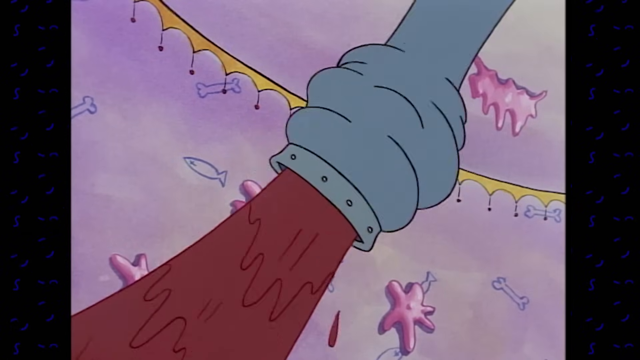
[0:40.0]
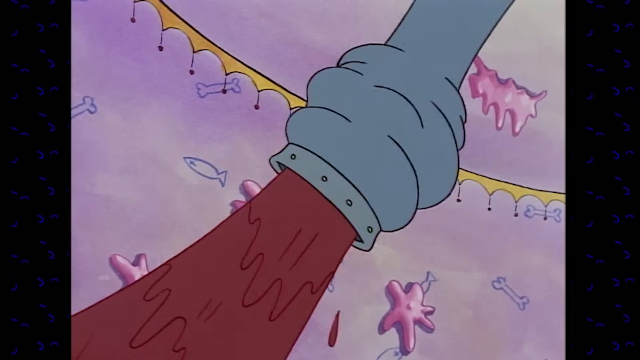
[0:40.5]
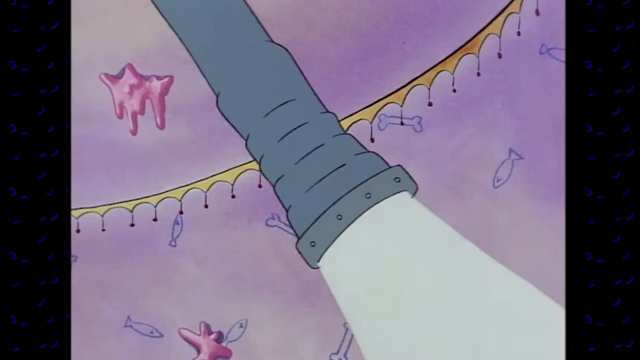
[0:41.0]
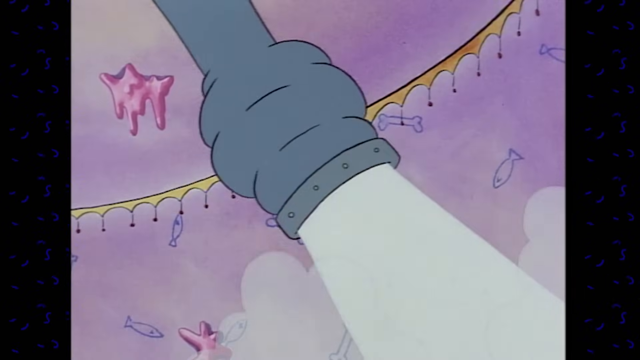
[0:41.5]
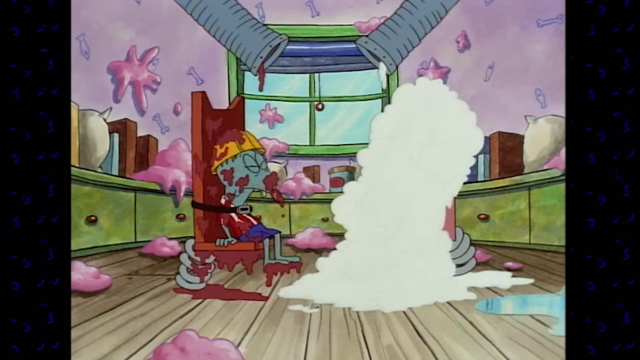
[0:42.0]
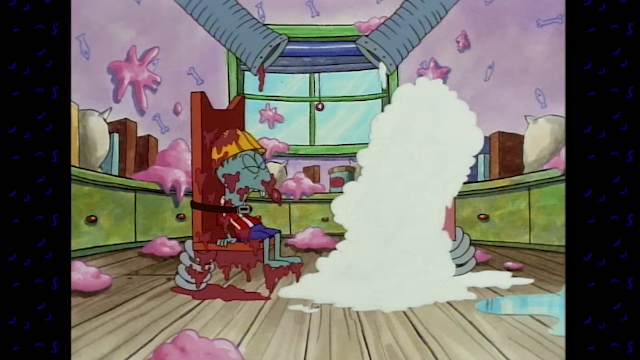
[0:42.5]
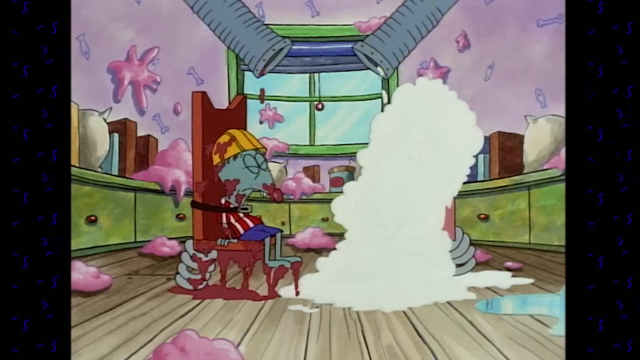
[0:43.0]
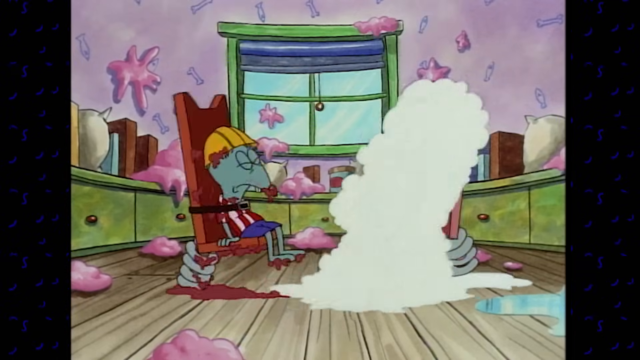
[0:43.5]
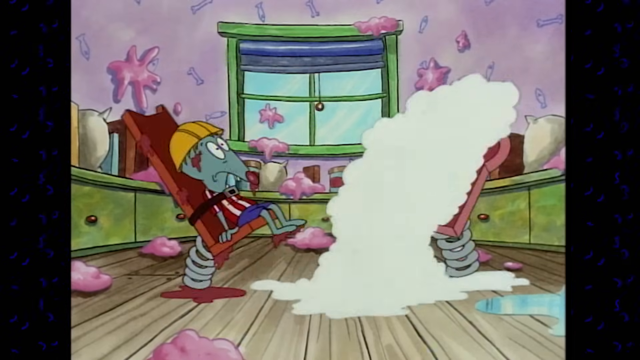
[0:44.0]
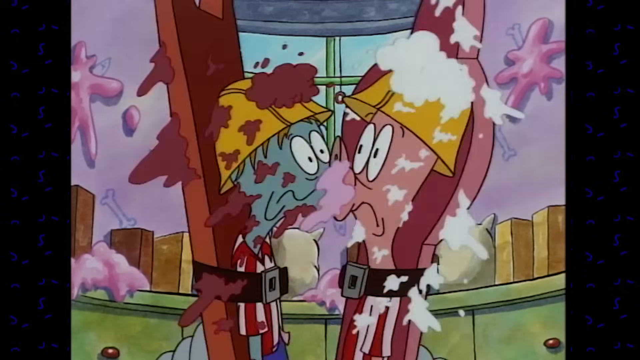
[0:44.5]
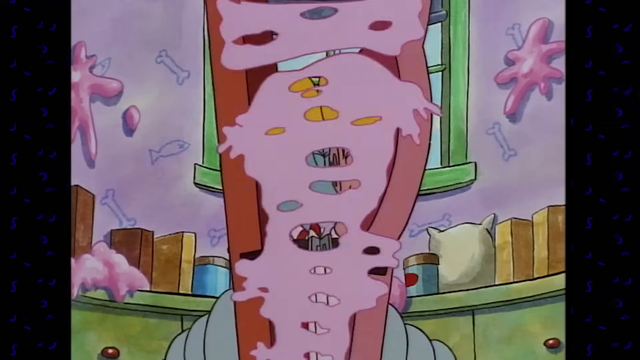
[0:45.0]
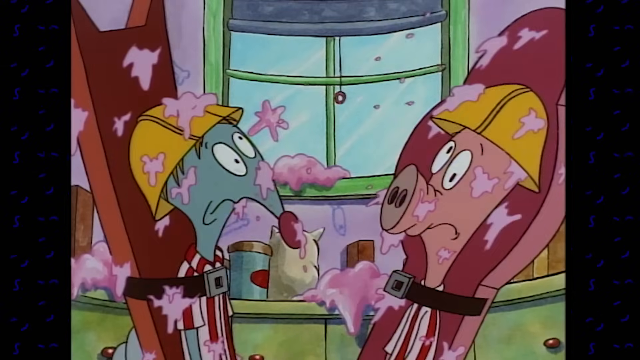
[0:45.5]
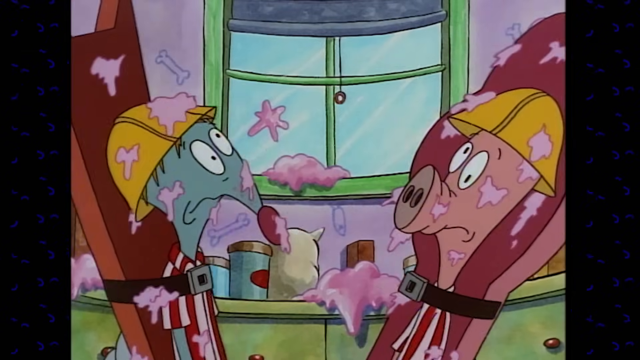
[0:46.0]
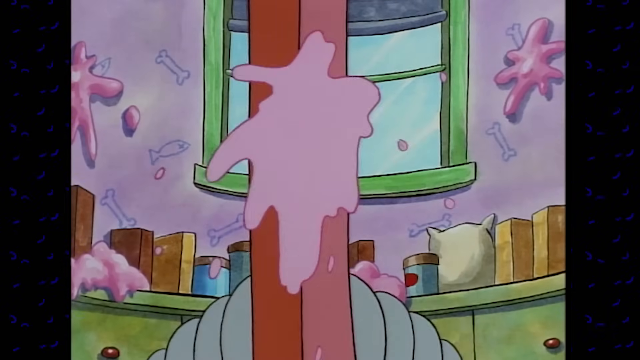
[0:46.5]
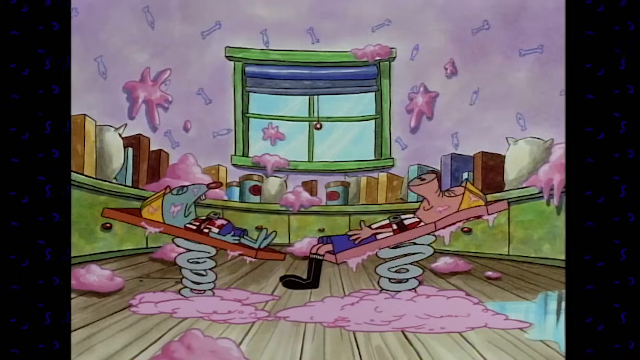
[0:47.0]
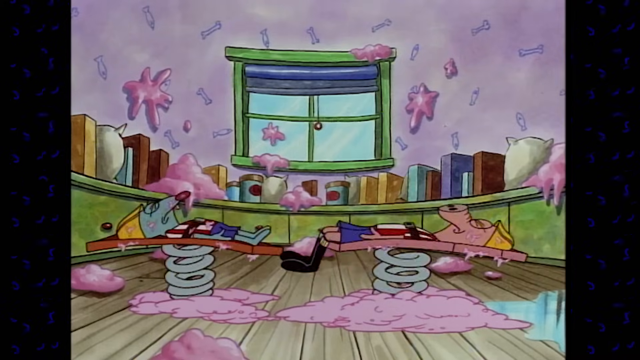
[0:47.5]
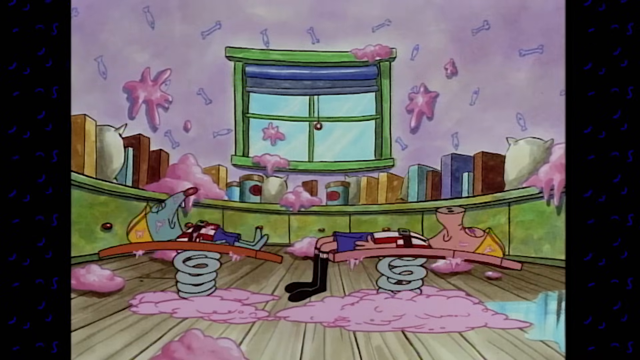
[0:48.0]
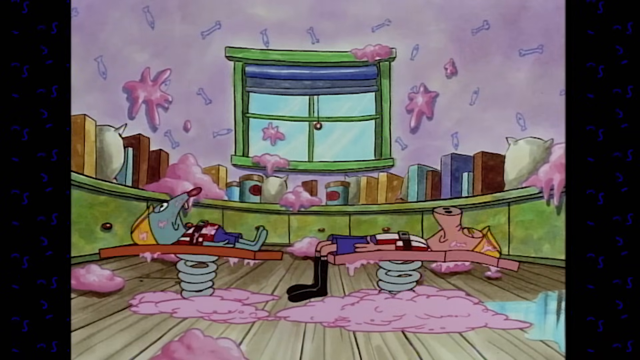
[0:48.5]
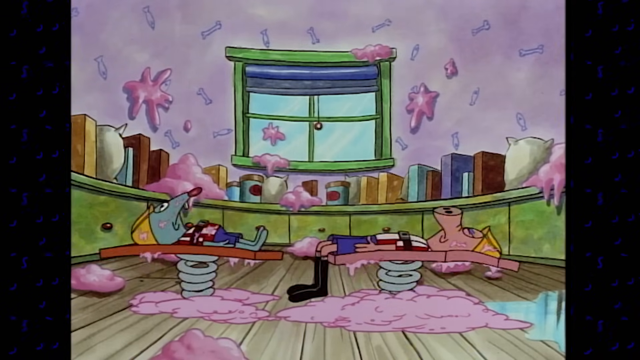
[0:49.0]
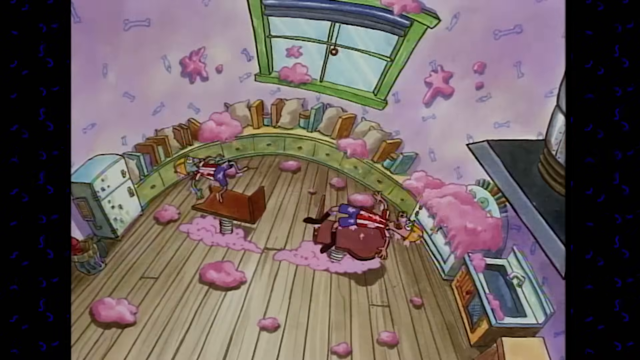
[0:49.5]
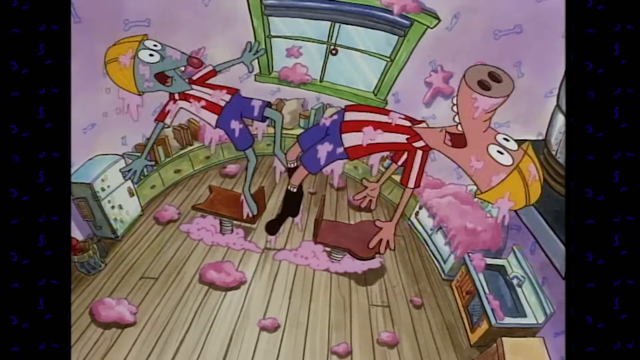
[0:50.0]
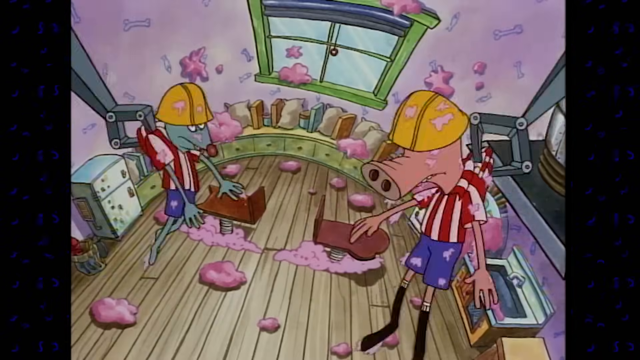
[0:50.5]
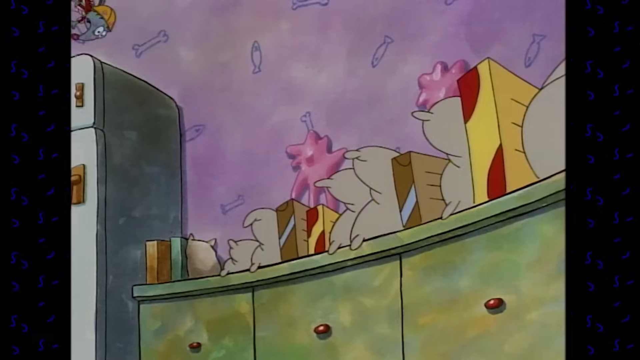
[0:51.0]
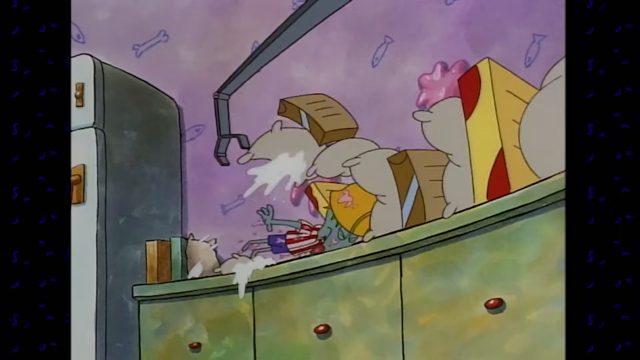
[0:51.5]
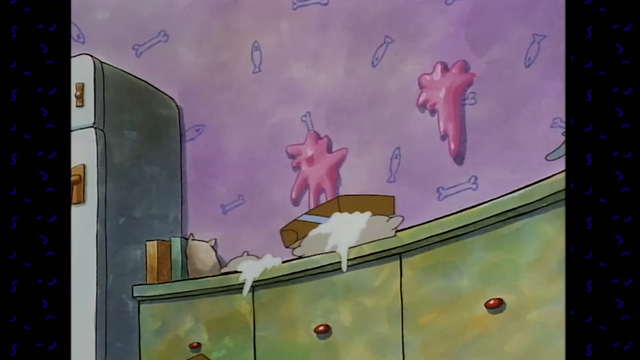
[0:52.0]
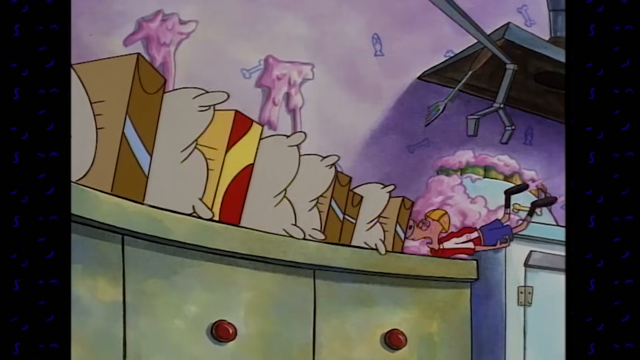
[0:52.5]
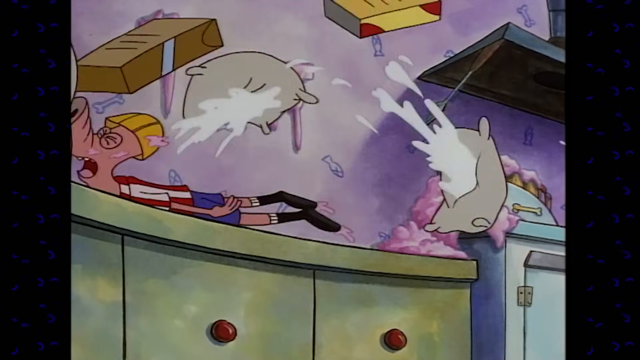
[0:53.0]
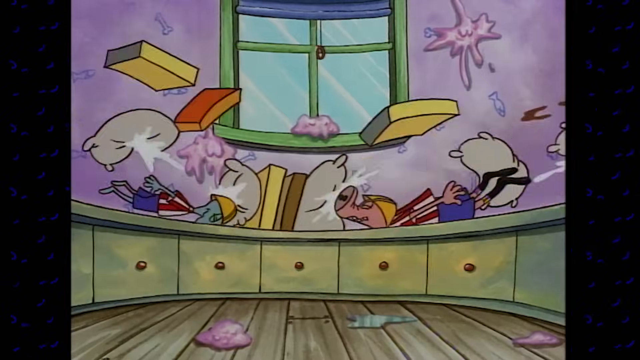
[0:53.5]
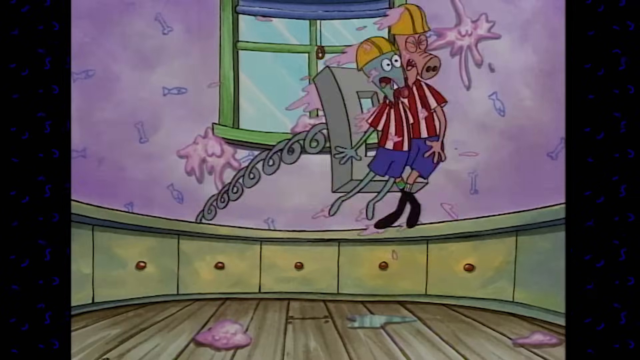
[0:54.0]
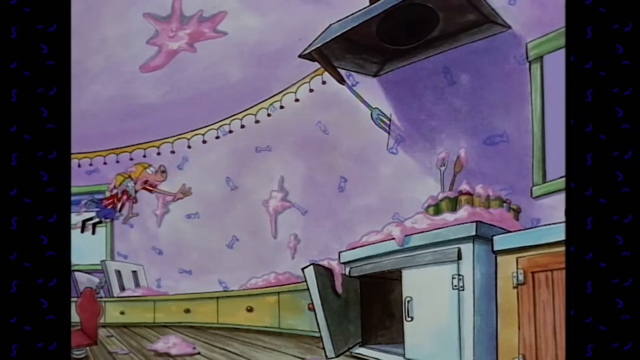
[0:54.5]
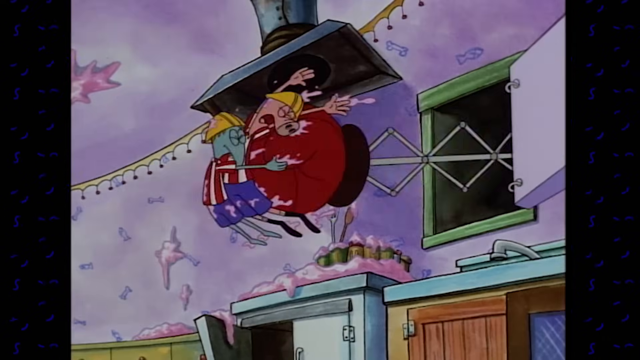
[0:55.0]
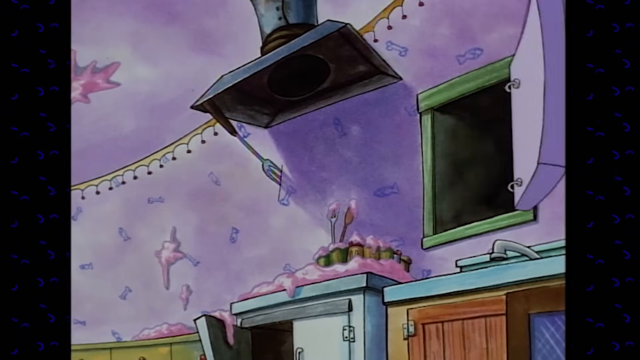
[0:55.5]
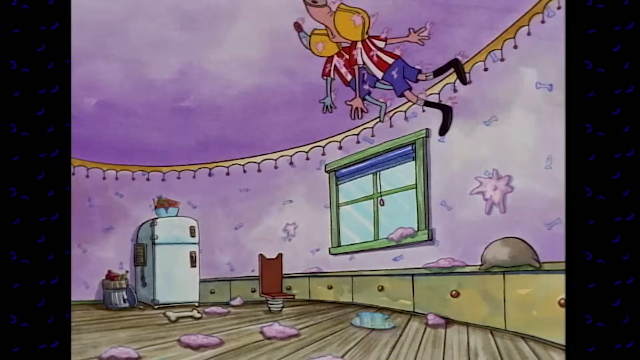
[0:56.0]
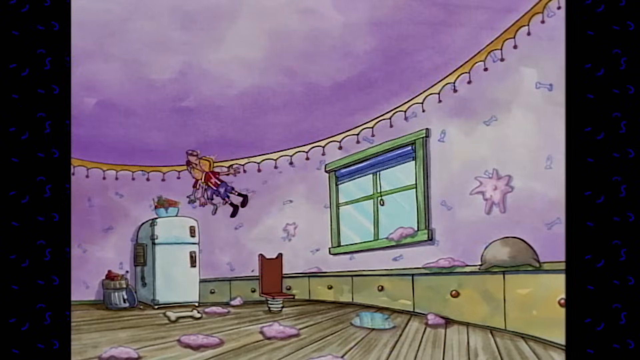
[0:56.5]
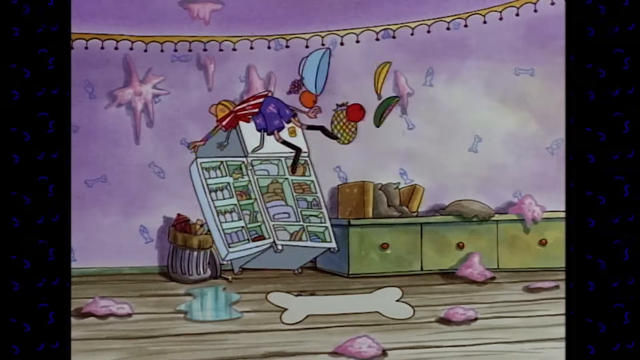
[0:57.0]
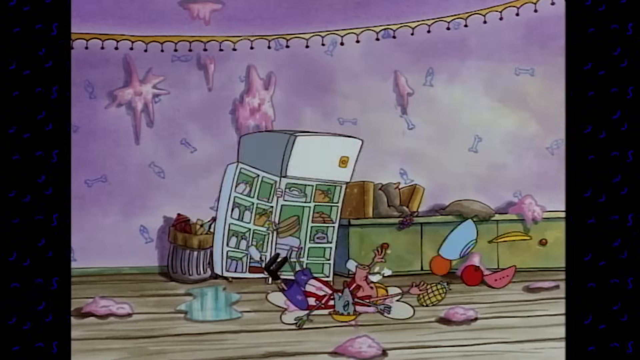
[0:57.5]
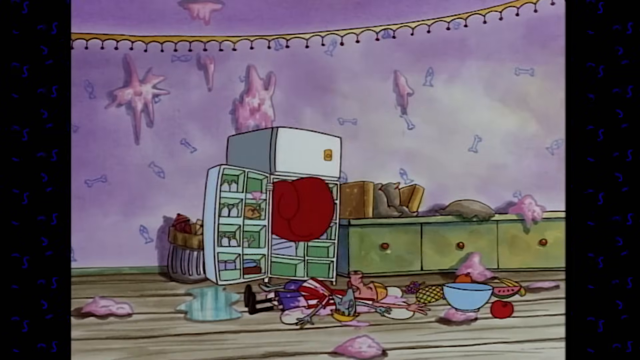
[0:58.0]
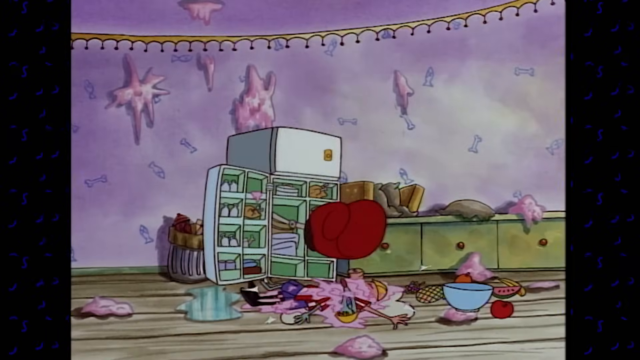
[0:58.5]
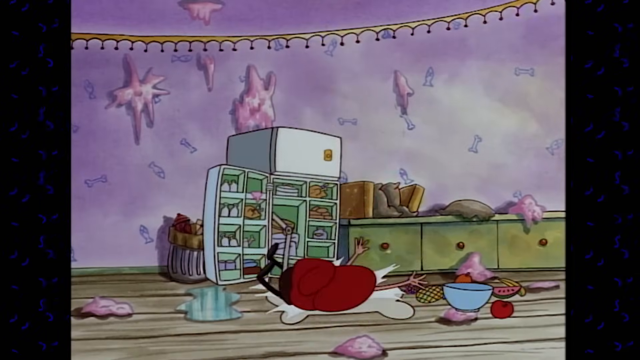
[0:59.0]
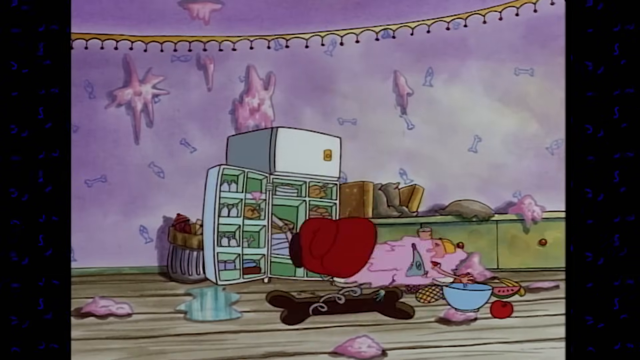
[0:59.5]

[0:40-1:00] A flexible pipe coming from the ceiling pumps some sort of red goo, and another pipe from the ceiling pumps some sort of white foam. The two chairs, one with the white foam and one with the red goo, fold straight and clap together with the two still strapped to them, and the white foam and red goo combine into the pink mess seen on the walls and floor everywhere. The chairs then go into a horizontal position and spring up. The straps loosen and the snout person and the mouse person are thrown into the air, caught by robotic arms and smashed around the kitchen through the countertop. A hidden door opens and a boxing glove attached to a spring appears and smashes them around. They fly into a closed refrigerator, which opens to reveal another boxing glove on a metal arm that punches them while they lie on the floor. Then part of the floor, shaped like a bone and also attached to a spring, opens and flings them out of the picture.